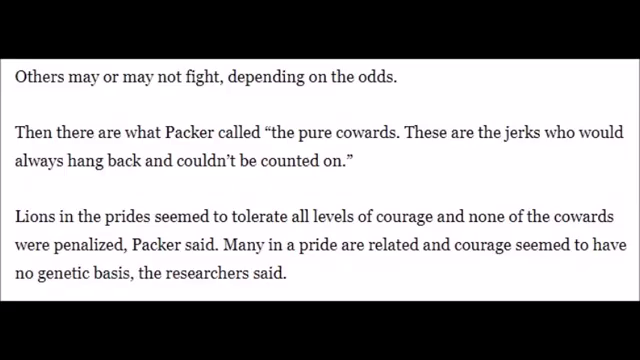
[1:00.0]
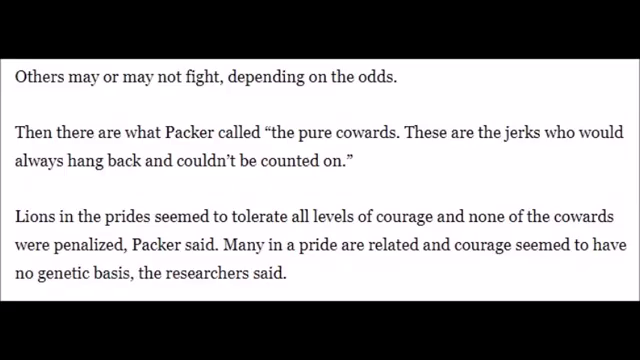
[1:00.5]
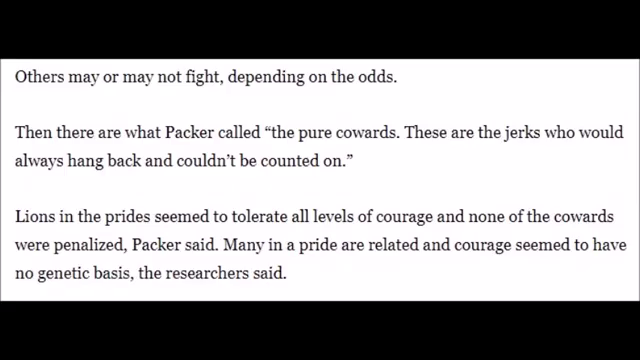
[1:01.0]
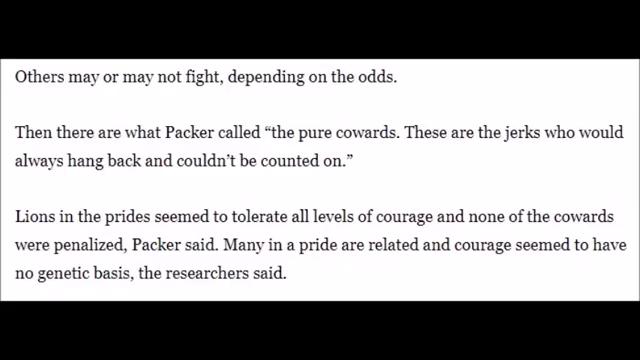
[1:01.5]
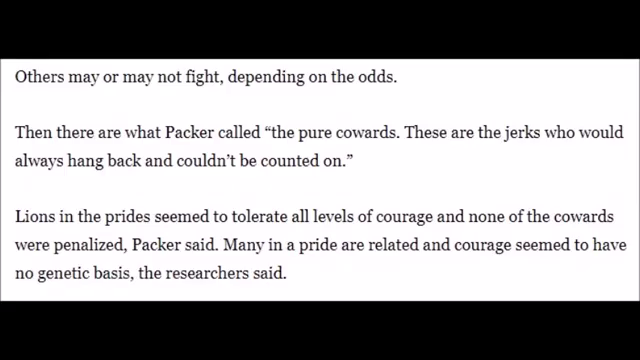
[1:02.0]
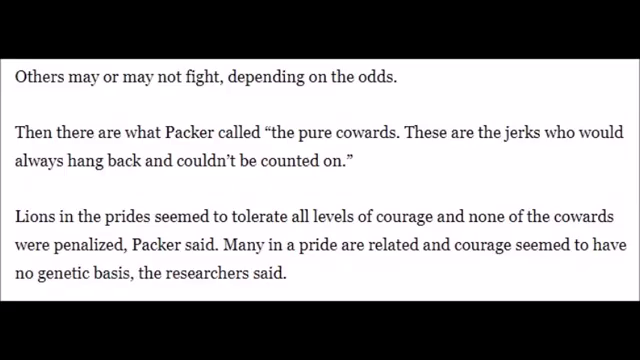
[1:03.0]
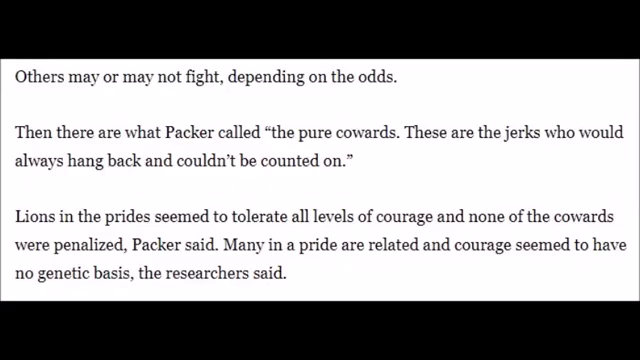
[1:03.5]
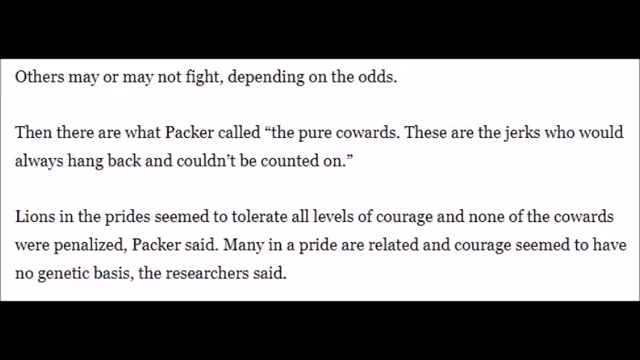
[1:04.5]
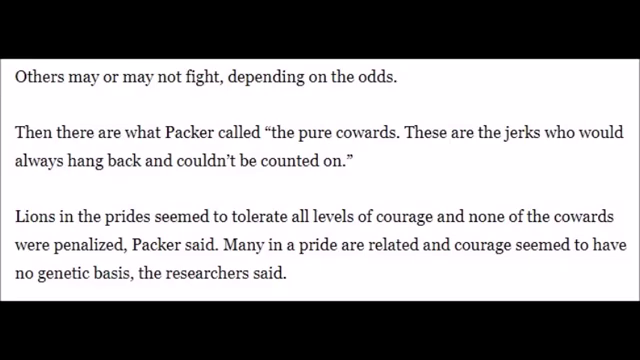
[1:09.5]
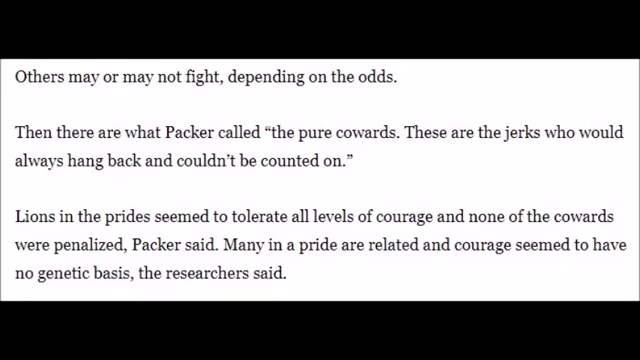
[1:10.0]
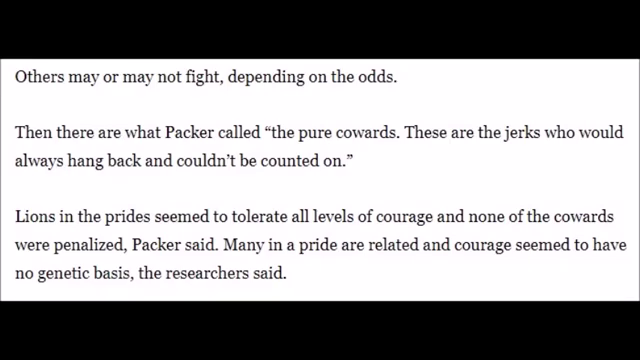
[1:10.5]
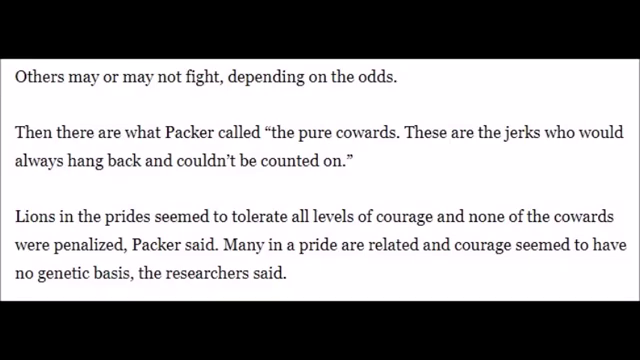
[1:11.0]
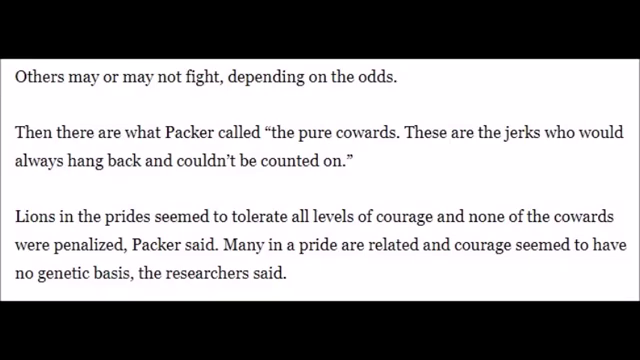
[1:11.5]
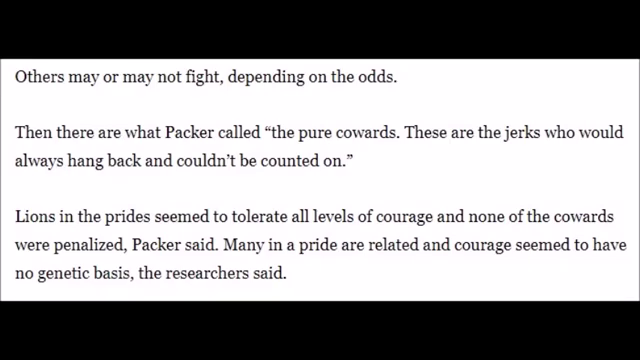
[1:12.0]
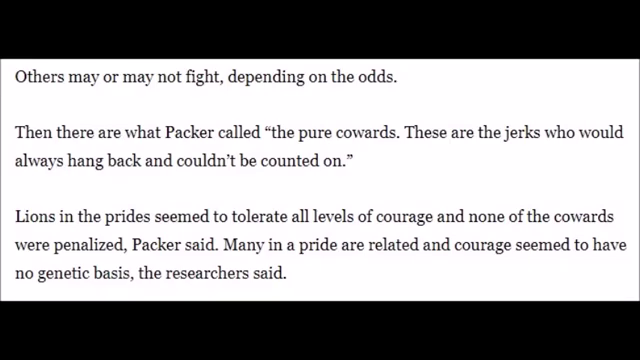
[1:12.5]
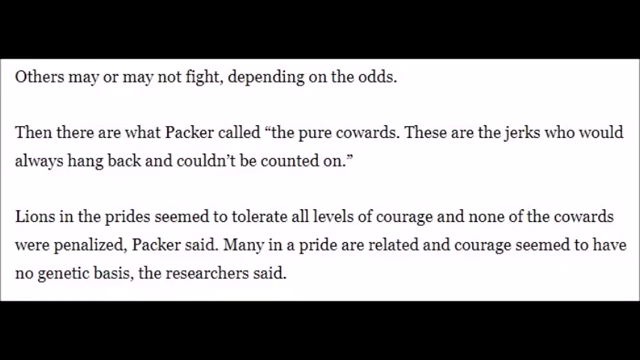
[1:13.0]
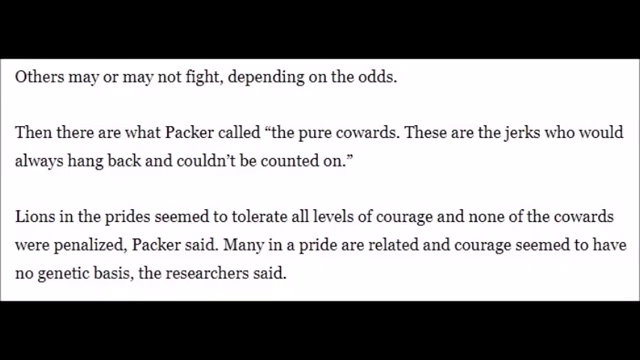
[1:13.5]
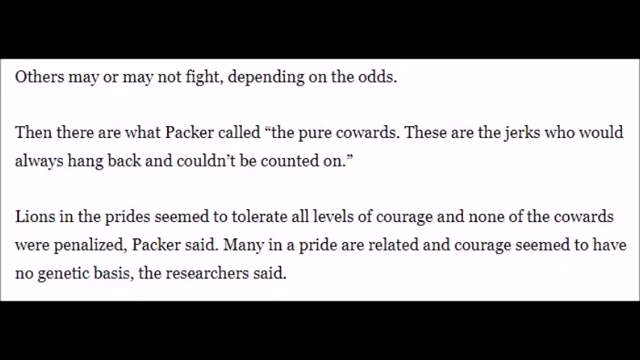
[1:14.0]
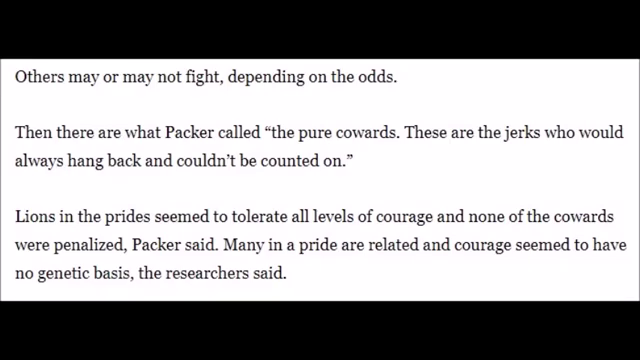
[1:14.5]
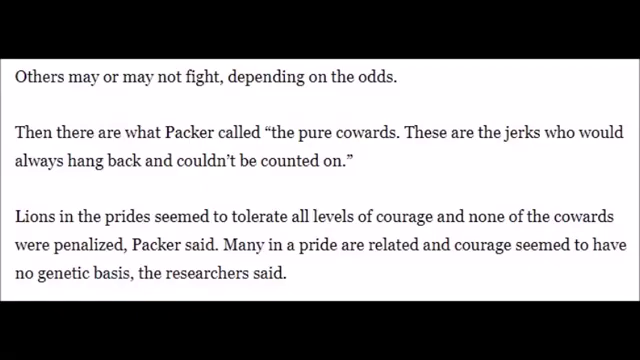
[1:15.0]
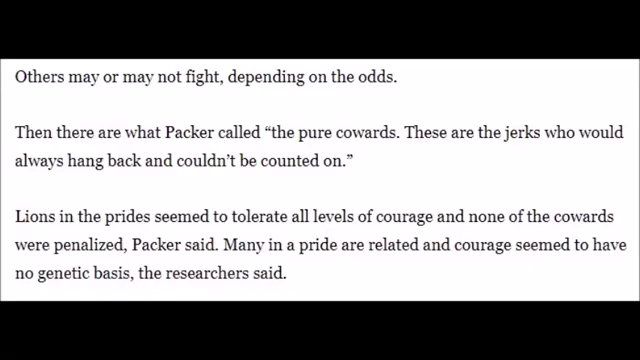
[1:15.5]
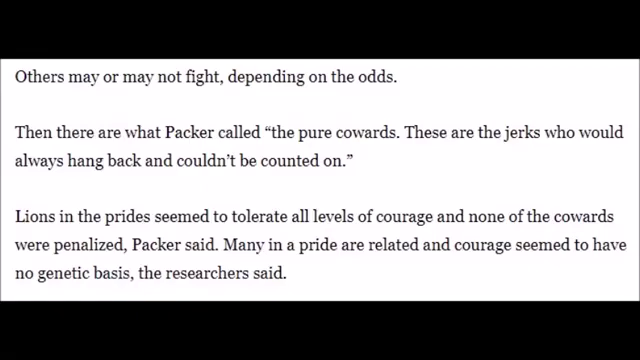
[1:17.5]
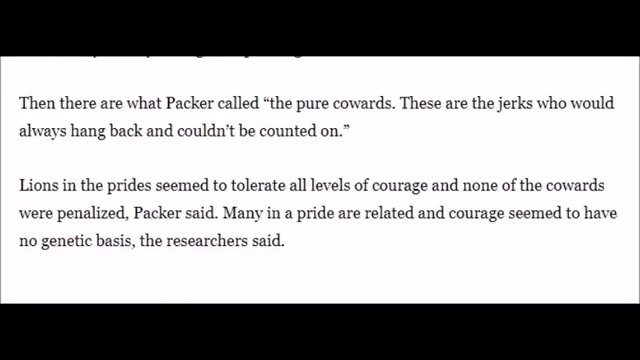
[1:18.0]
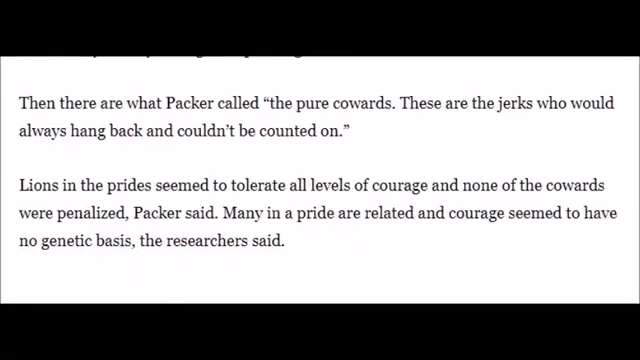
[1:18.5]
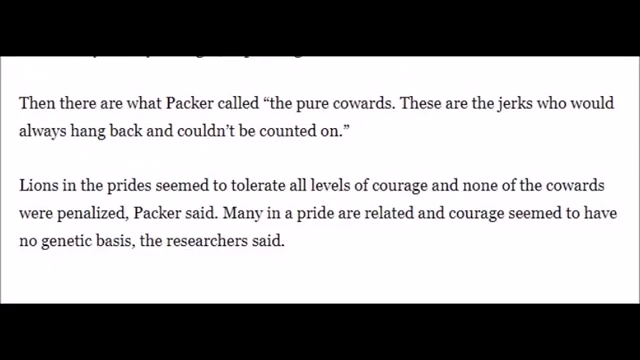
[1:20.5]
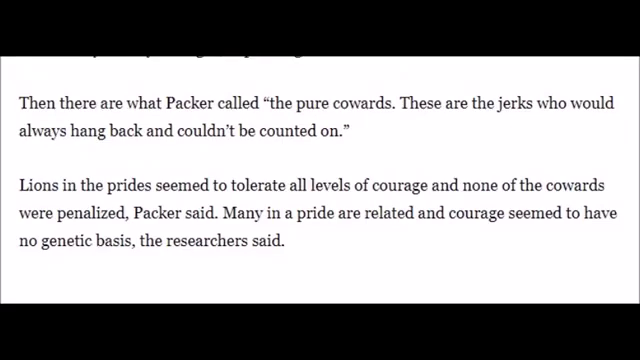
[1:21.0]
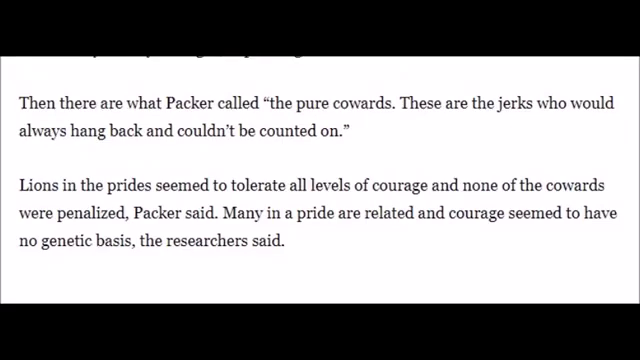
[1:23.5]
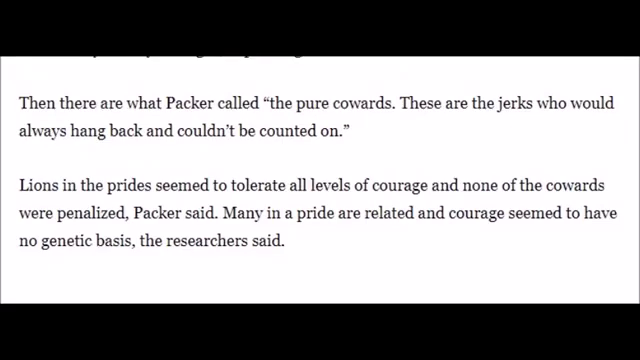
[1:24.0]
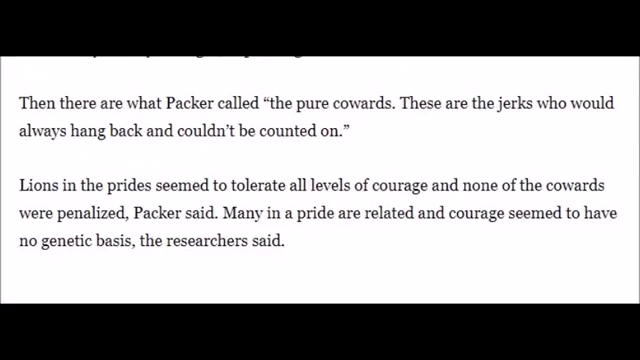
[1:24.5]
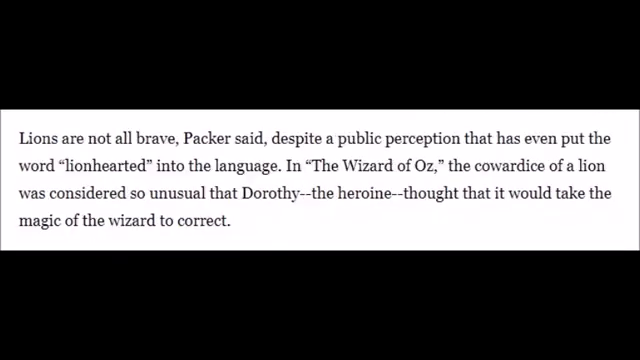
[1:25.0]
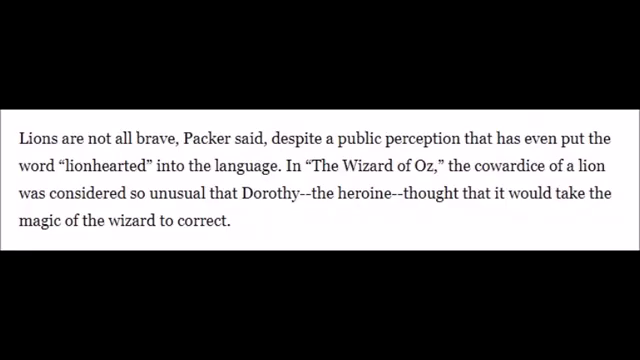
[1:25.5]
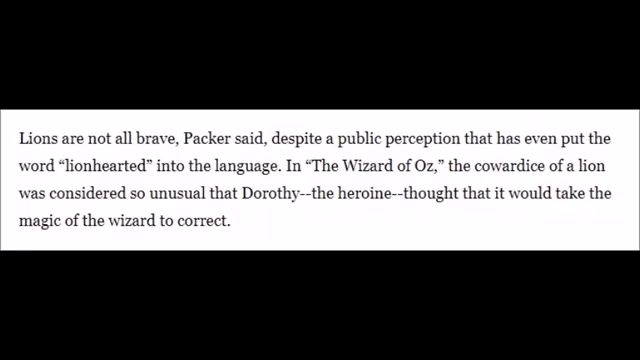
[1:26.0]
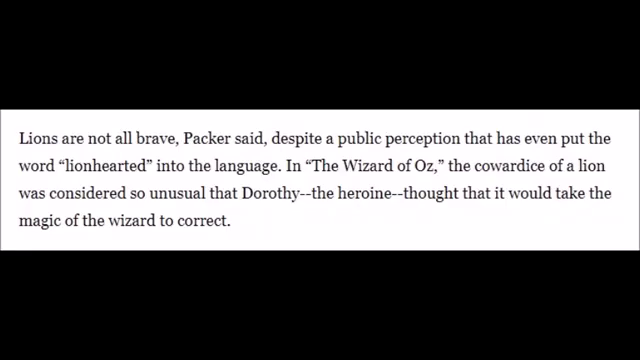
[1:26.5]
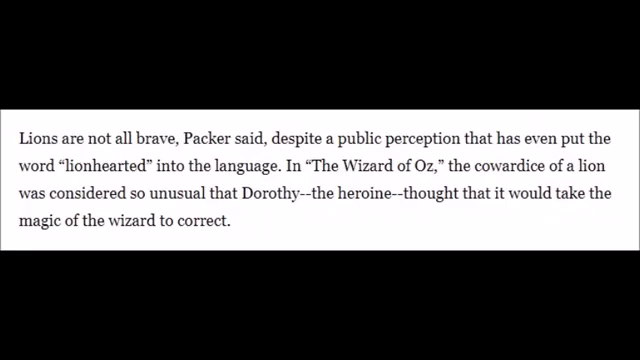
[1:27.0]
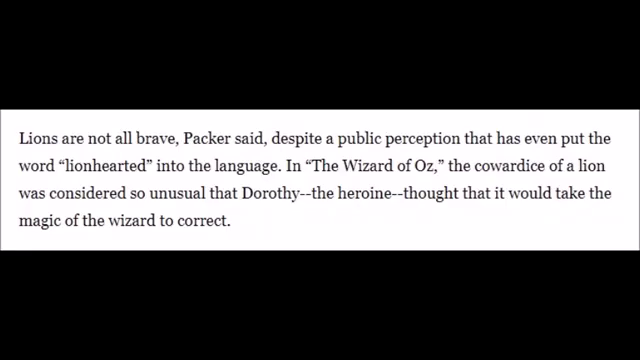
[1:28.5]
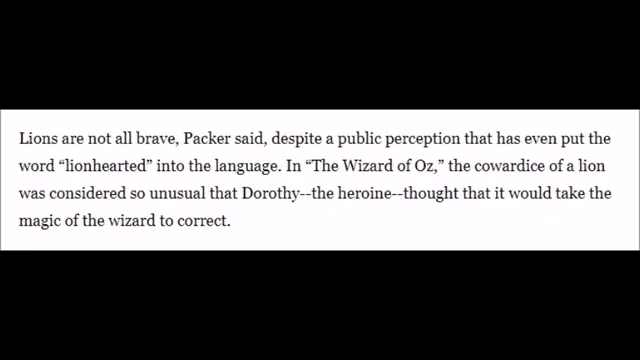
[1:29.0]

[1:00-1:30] An extract from an article reads: "Others may or may not fight depending on the odds. Then there are what Packer called the pure cowards. These are the jerks who would always hang back and couldn't be counted on. Lions in the prides seem to tolerate all levels of courage and none of the cowards were penalized, Packer said. Many in a pride are related and courage seemed to have no genetic basis, the researcher said." Next, only a subset is shown: the second and third paragraphs, the one beginning "Then there are what Packer called pure cowards" and the one beginning "Lions in the prides seem to tolerate all levels," without the first paragraph. Finally the view transitions to a different paragraph, which reads: "Lions are not all brave, Packer said, despite a public perception that has even put the word lion-hearted into the language. In the Wizard of Oz, the cowardice of a lion was considered so unusual that Dorothy, the heroine, thought that it would take the magic of the wizard to correct."